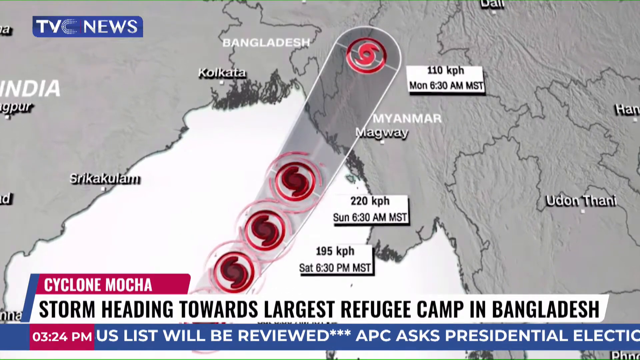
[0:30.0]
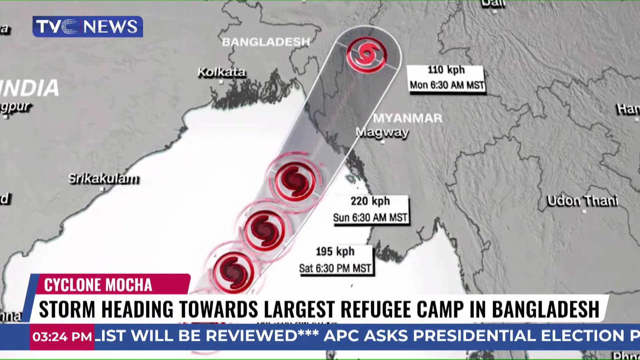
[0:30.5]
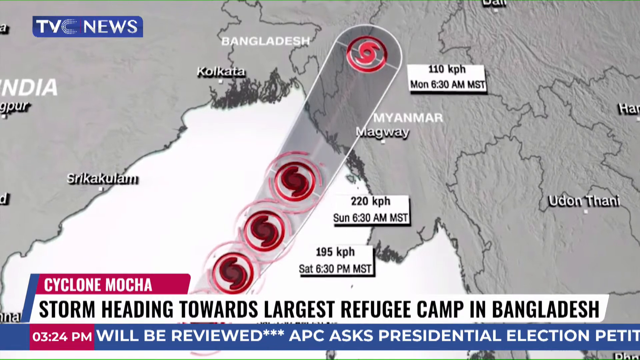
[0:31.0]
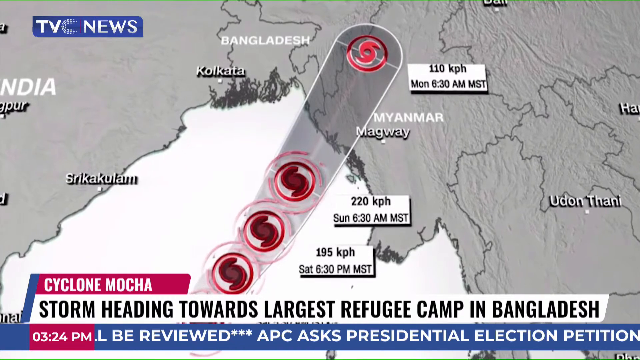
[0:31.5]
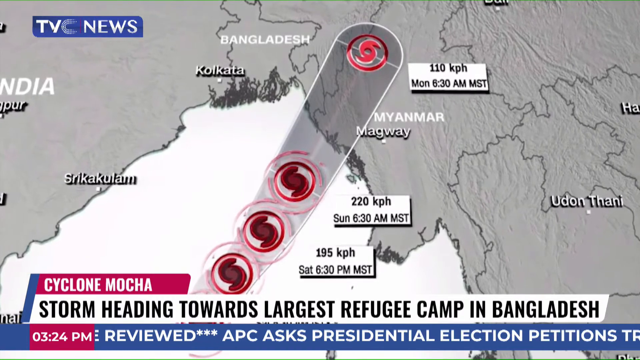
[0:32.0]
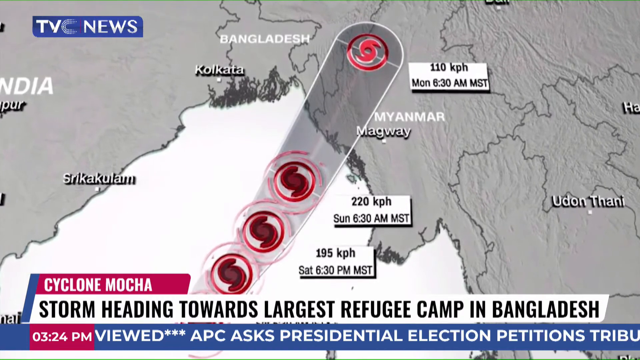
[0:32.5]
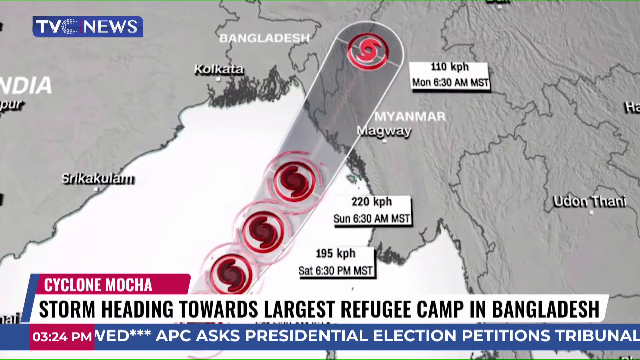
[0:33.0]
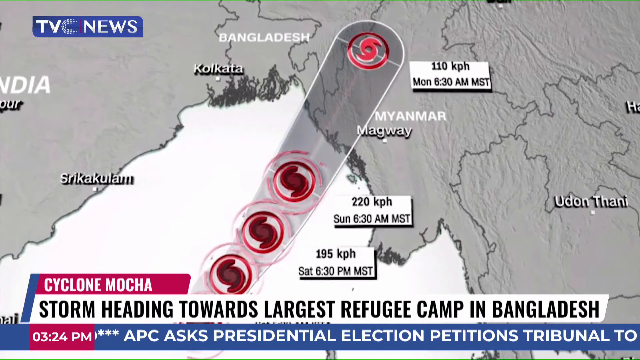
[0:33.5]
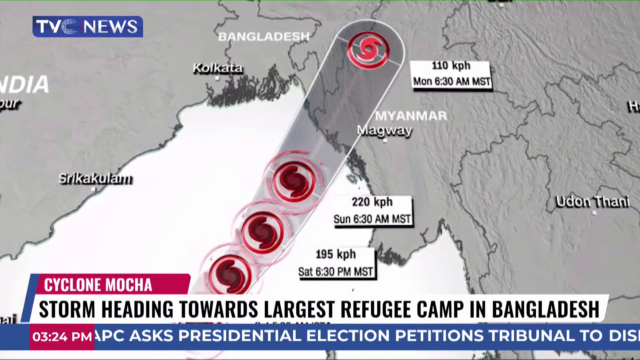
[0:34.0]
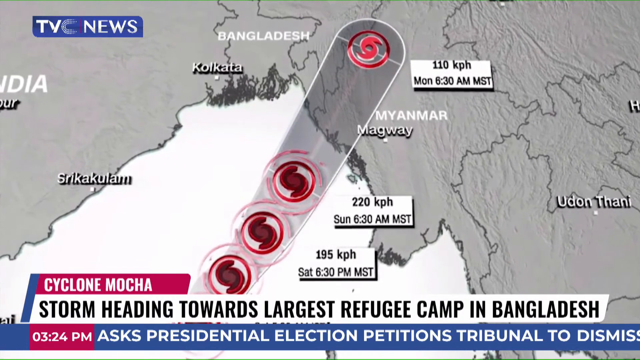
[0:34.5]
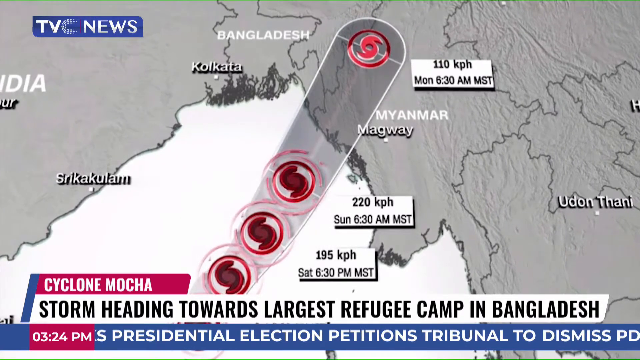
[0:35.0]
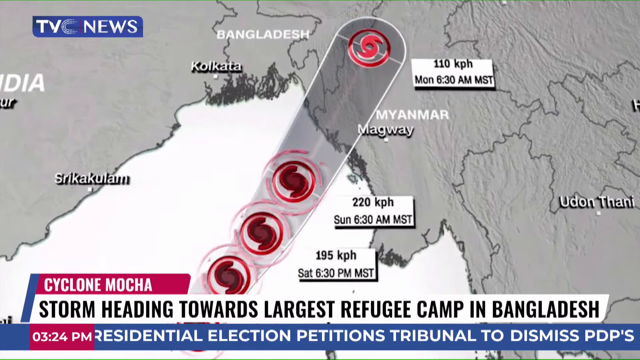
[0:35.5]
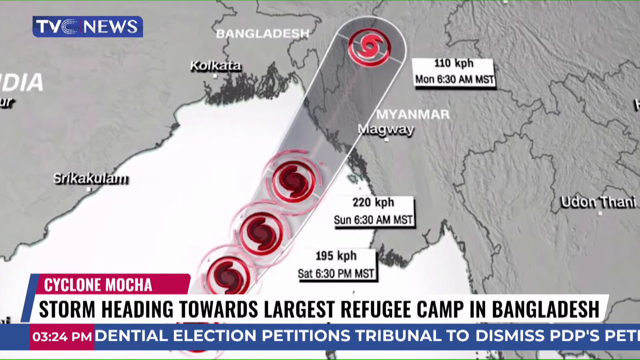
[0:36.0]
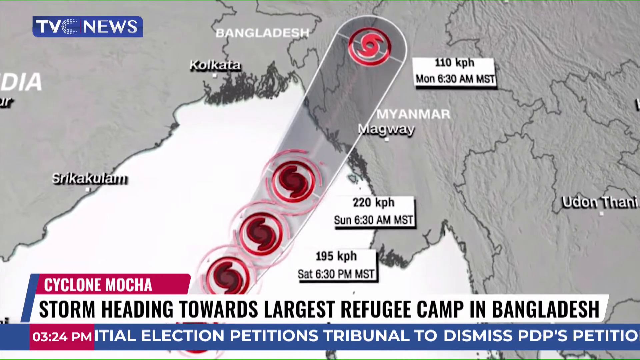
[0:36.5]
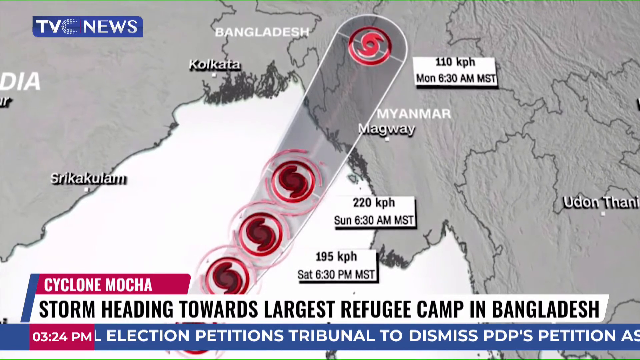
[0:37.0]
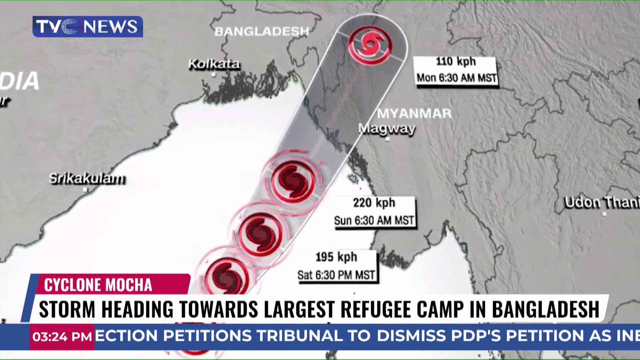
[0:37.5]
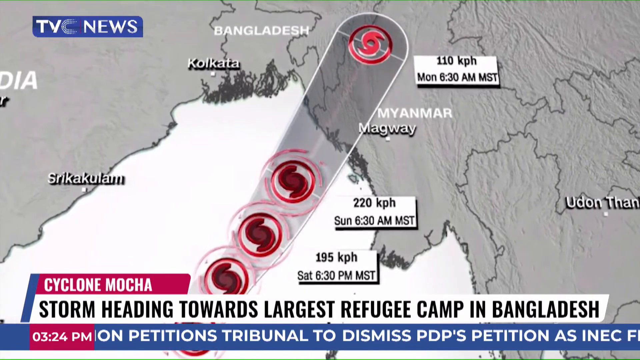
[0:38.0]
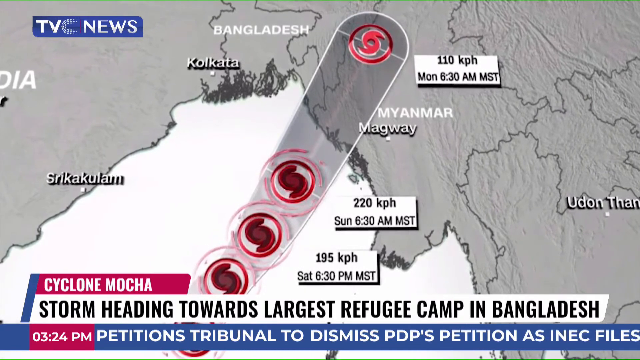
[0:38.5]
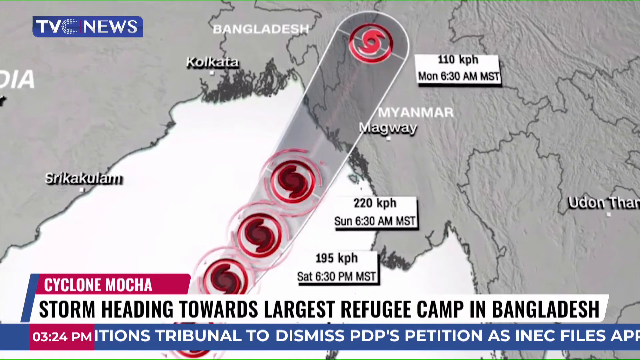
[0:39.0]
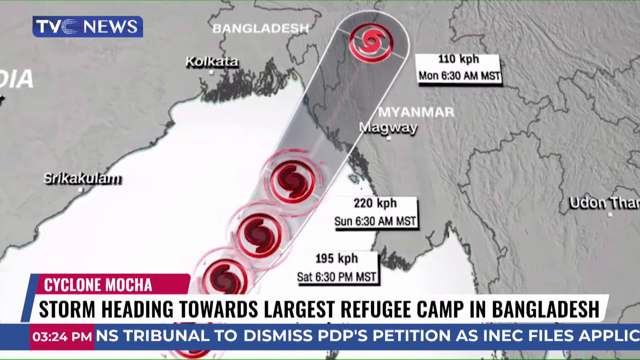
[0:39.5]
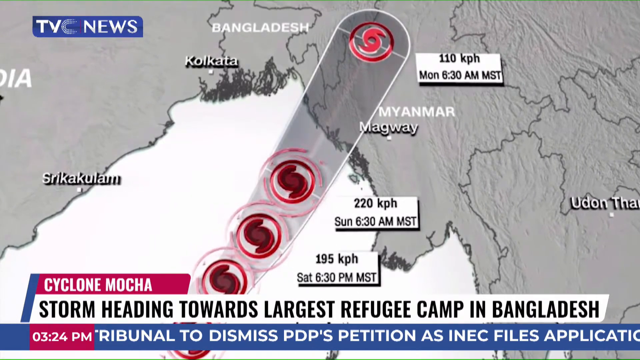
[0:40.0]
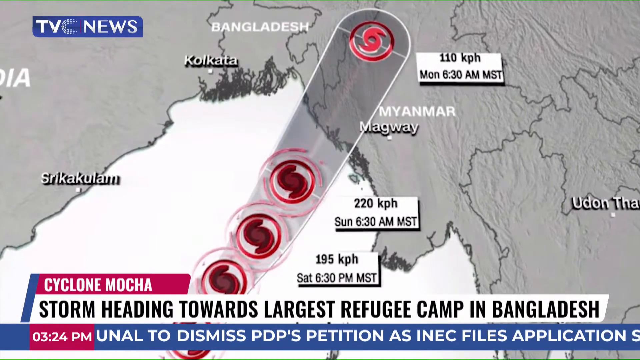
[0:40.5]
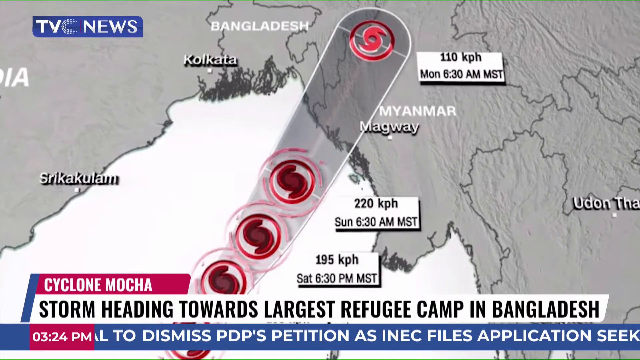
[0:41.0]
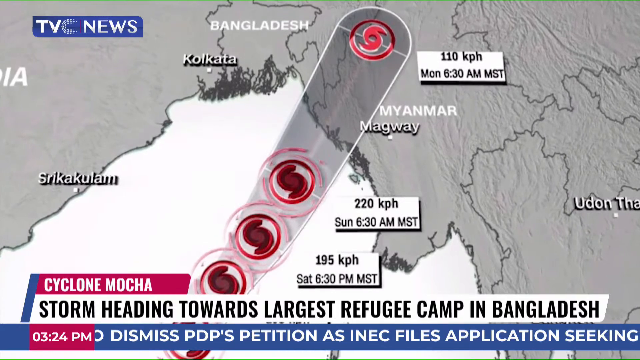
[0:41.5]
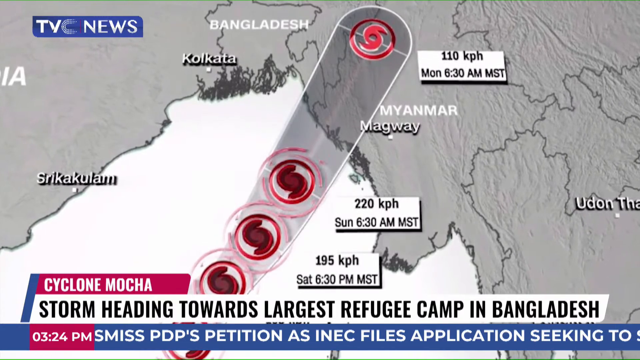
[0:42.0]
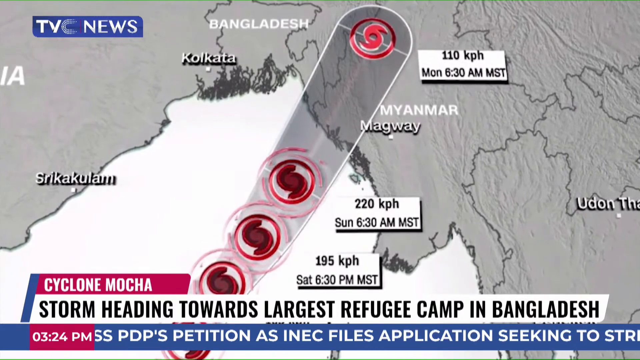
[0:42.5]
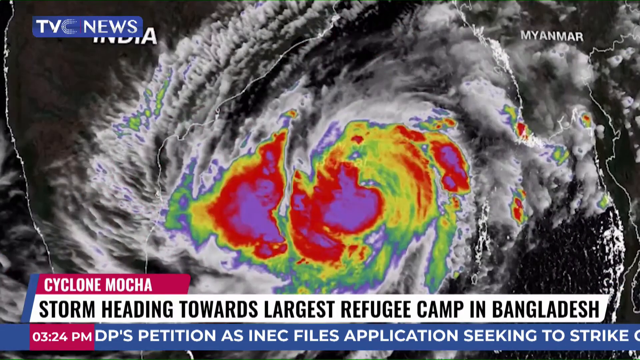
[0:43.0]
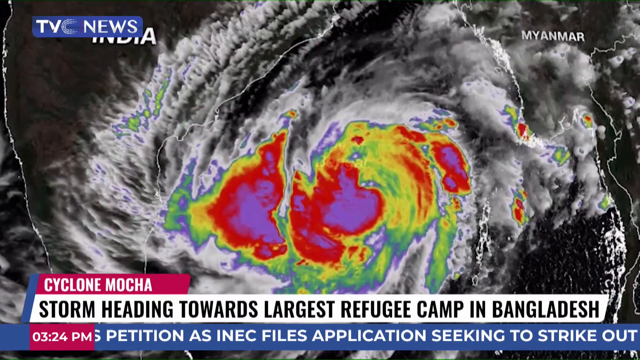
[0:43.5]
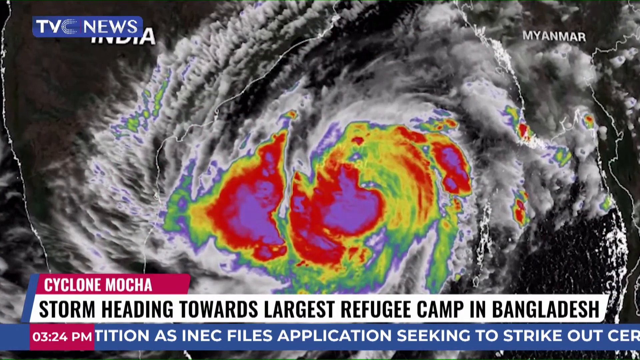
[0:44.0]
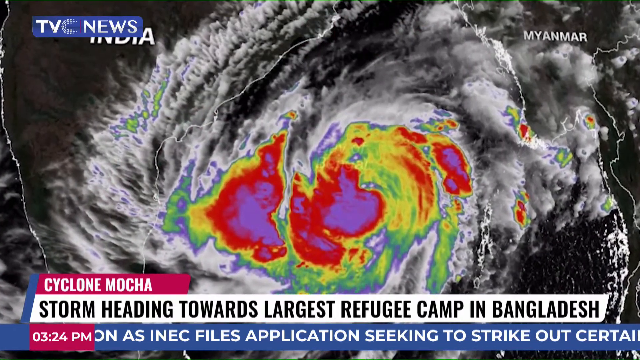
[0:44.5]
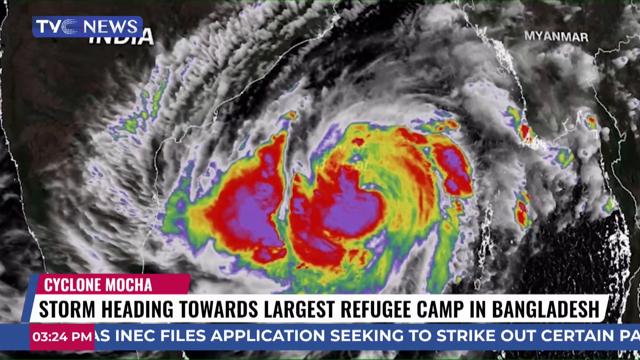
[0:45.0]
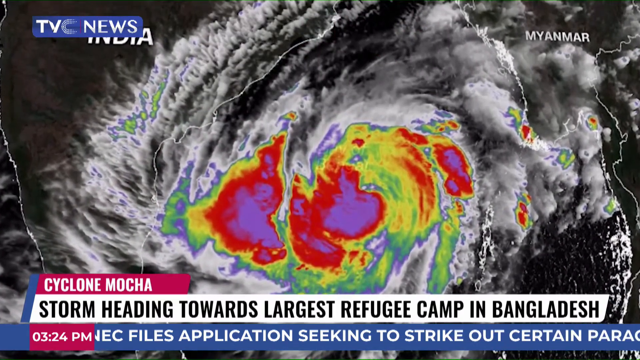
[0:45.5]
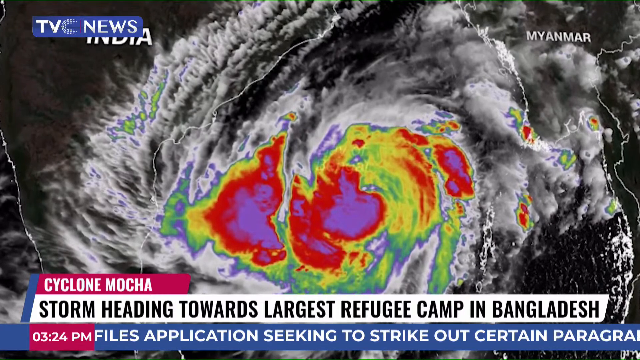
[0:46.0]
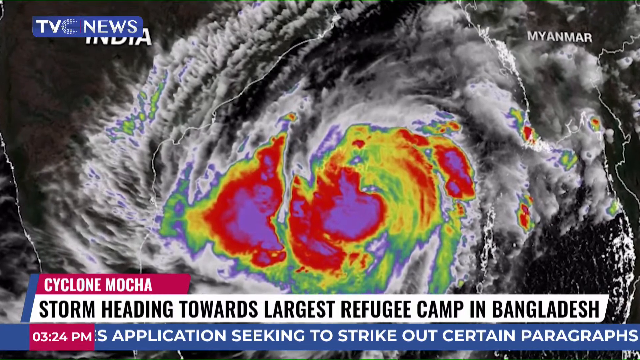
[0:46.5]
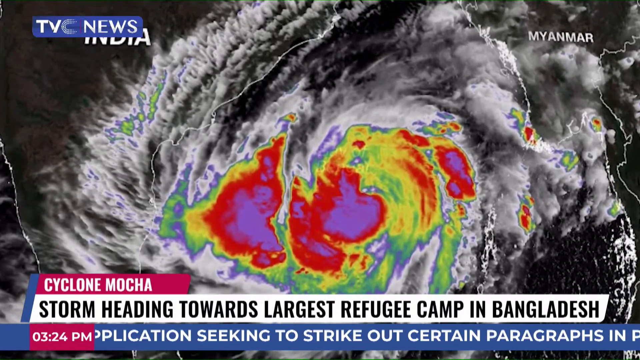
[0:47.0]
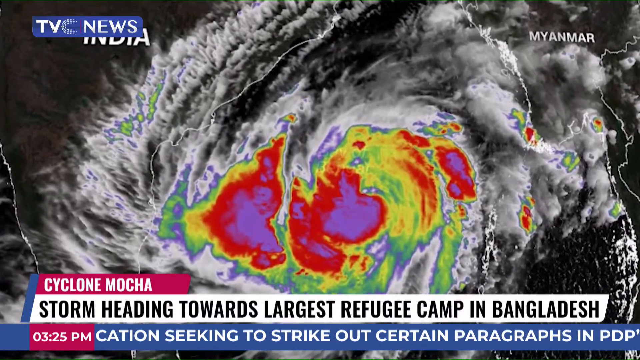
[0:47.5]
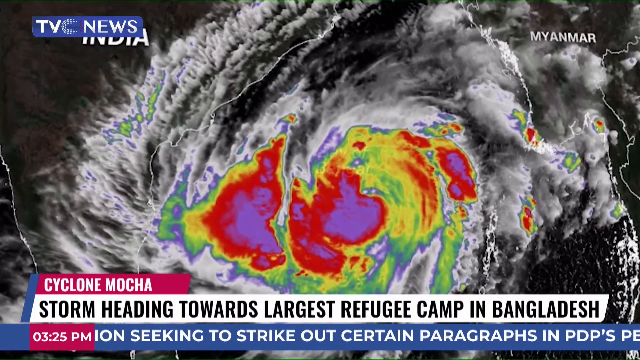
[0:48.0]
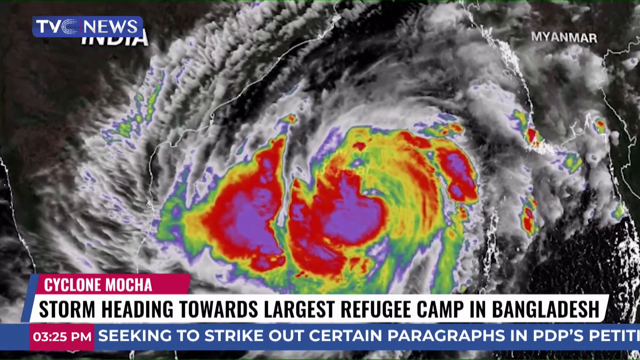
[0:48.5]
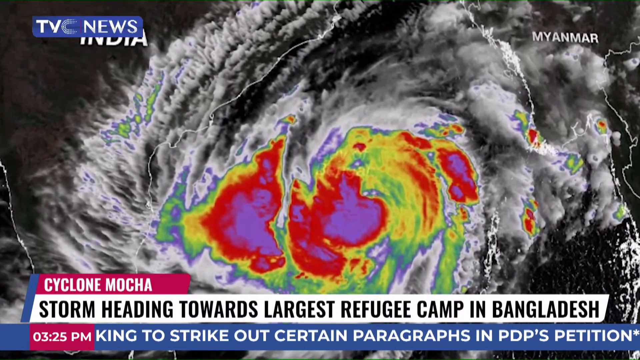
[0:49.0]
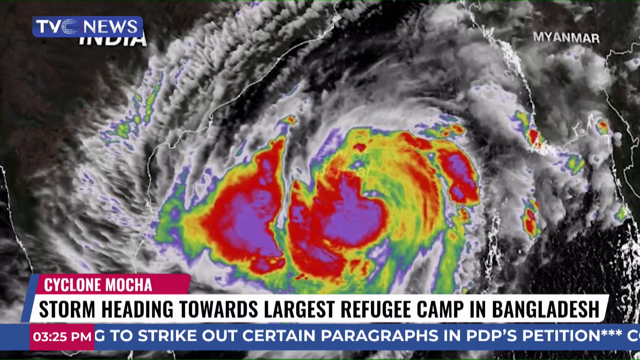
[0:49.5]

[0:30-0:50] Wind figures of 120 kph and 195 appear. A map of the country shows the storm, called Cyclone Mocha, centered right over Bangladesh and headed towards the largest refugee camp in Bangladesh, with the eye of the storm over land. Freeways packed with traffic are then shown.